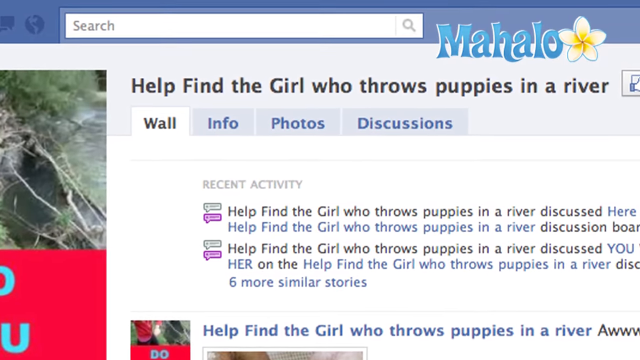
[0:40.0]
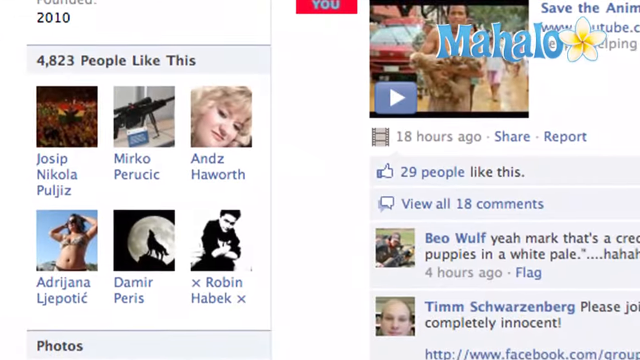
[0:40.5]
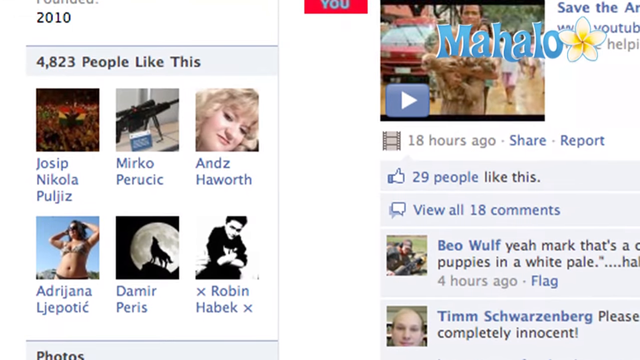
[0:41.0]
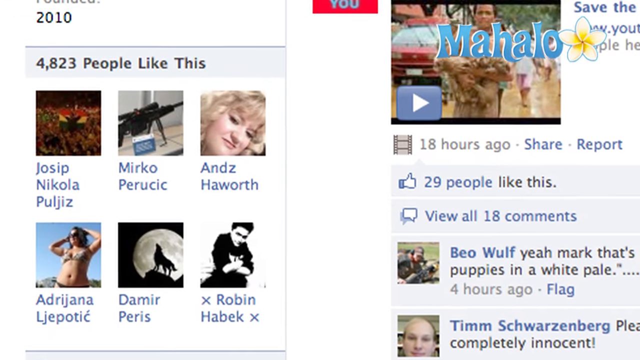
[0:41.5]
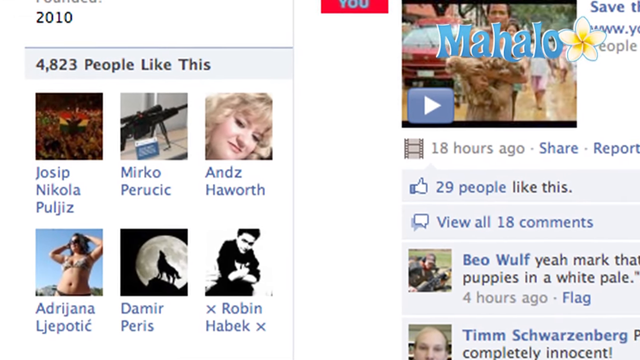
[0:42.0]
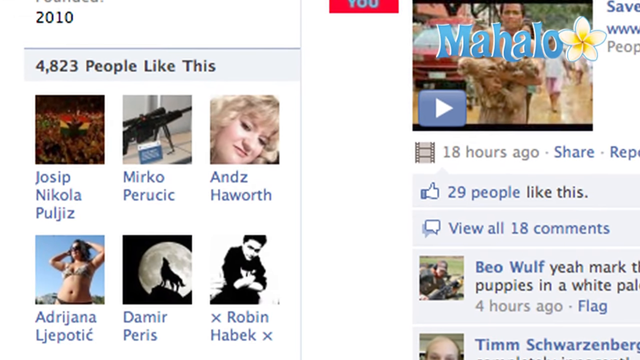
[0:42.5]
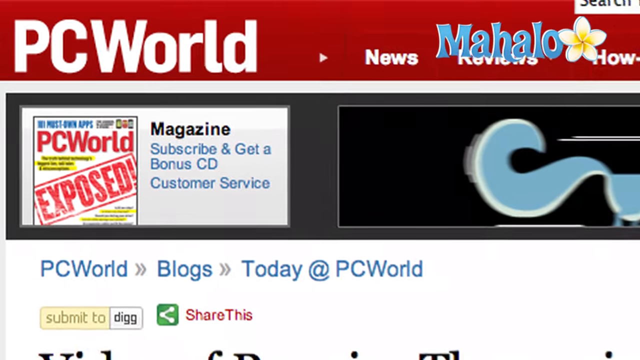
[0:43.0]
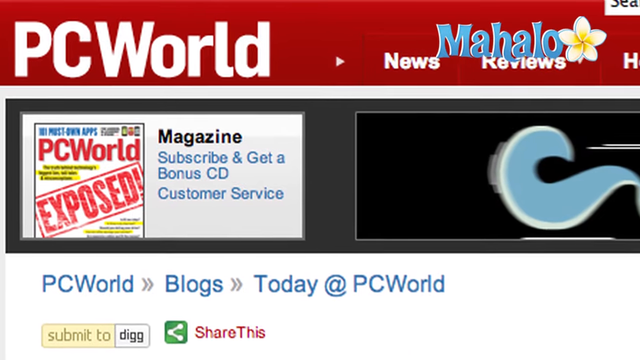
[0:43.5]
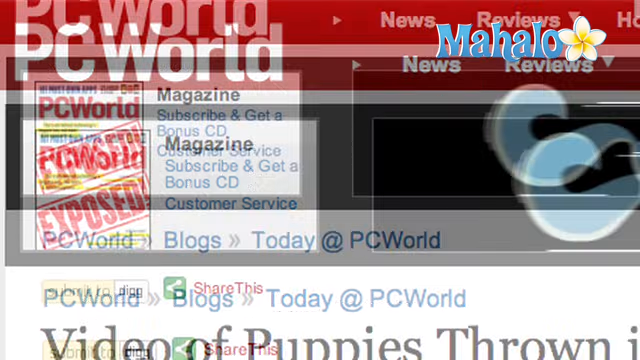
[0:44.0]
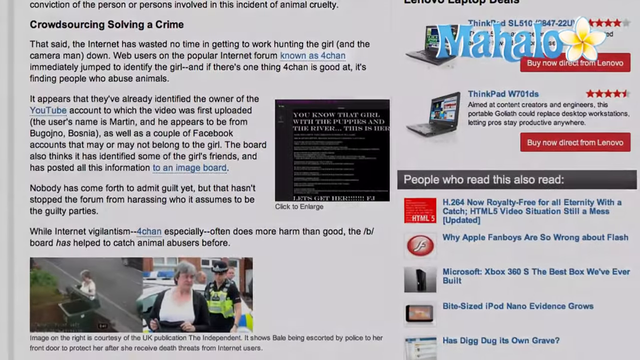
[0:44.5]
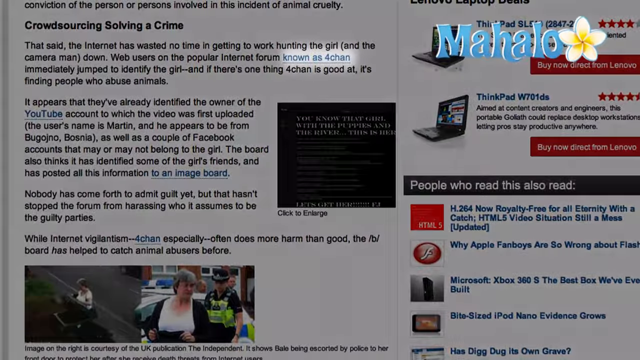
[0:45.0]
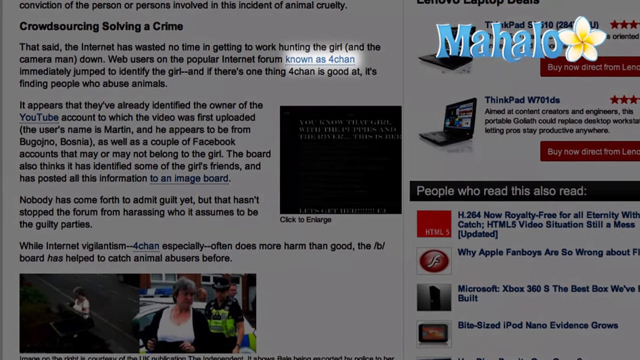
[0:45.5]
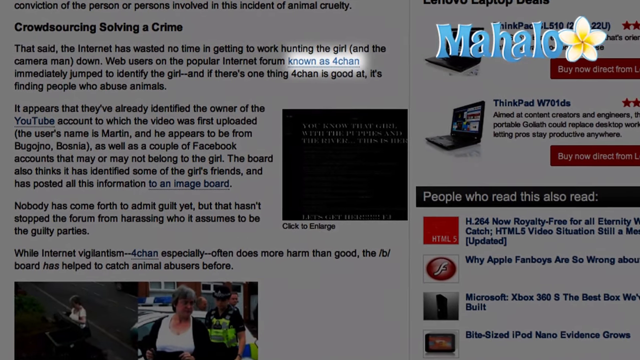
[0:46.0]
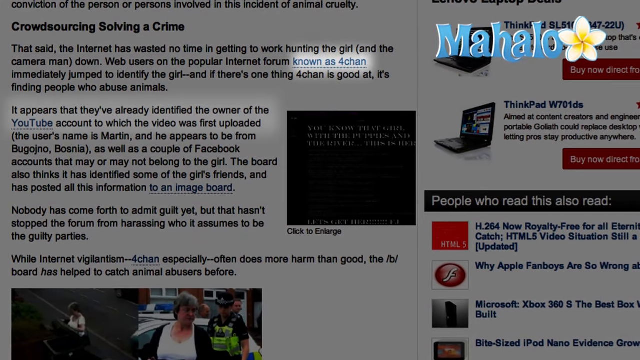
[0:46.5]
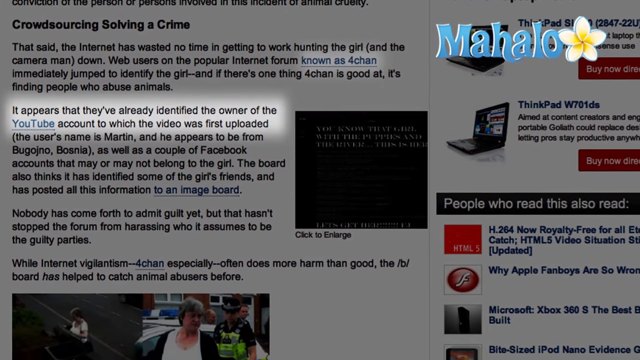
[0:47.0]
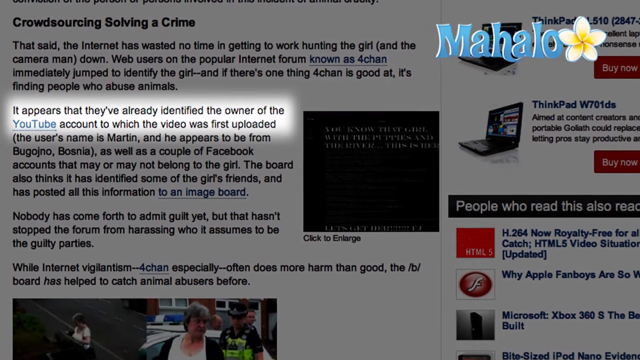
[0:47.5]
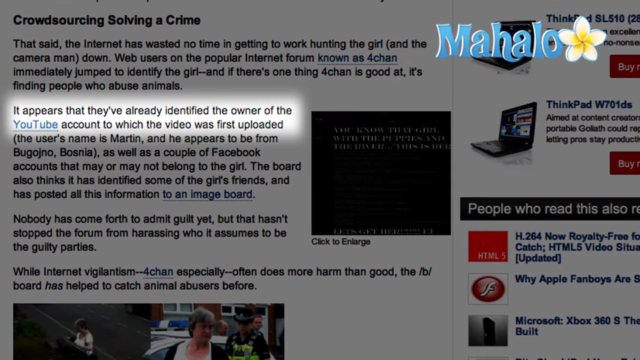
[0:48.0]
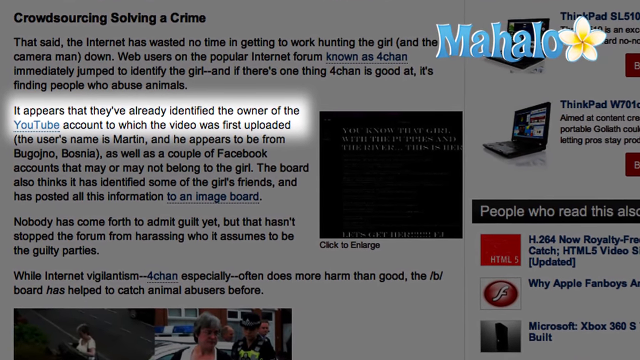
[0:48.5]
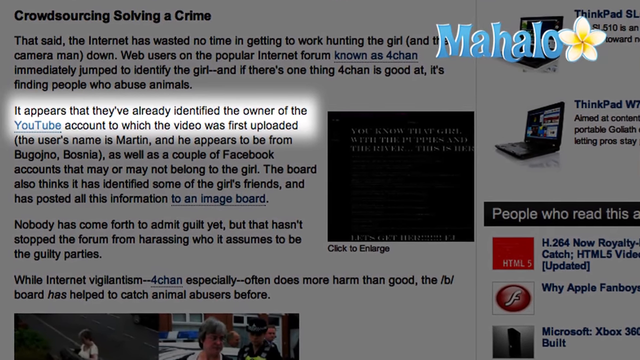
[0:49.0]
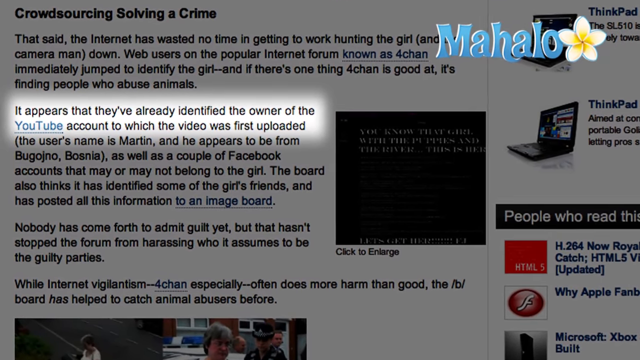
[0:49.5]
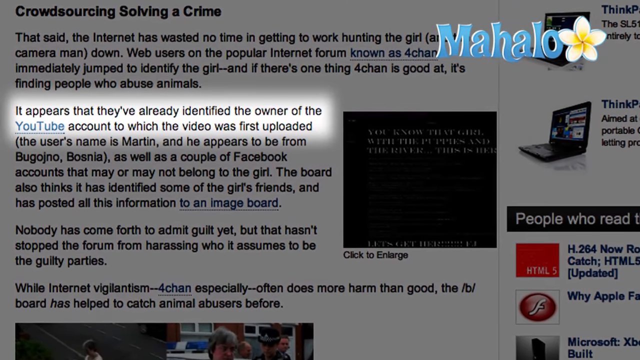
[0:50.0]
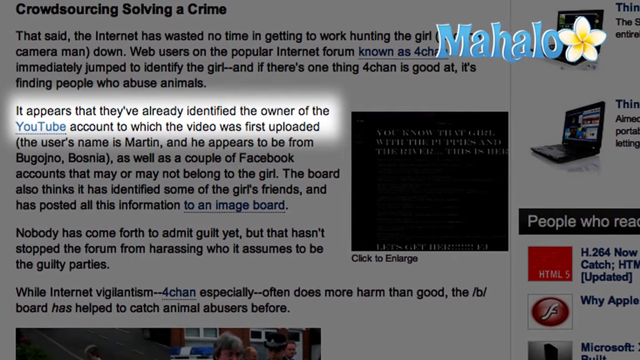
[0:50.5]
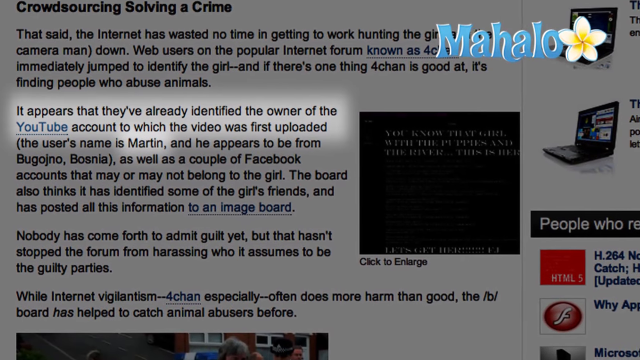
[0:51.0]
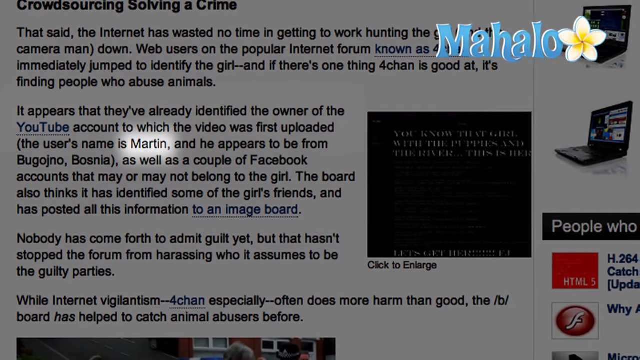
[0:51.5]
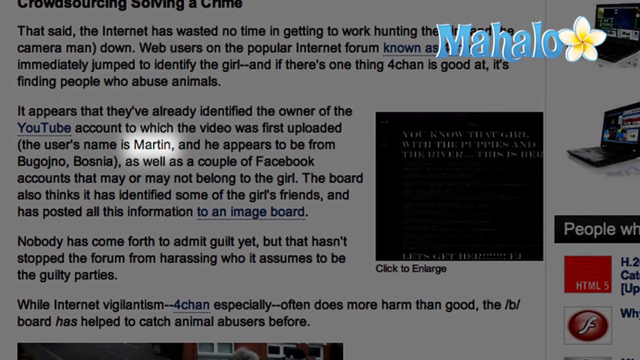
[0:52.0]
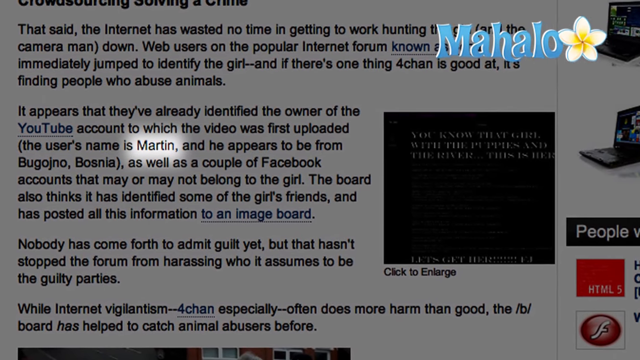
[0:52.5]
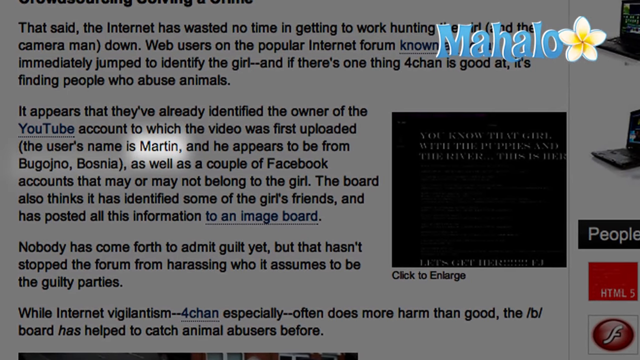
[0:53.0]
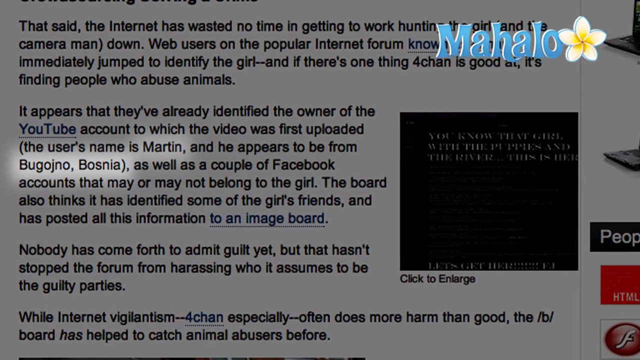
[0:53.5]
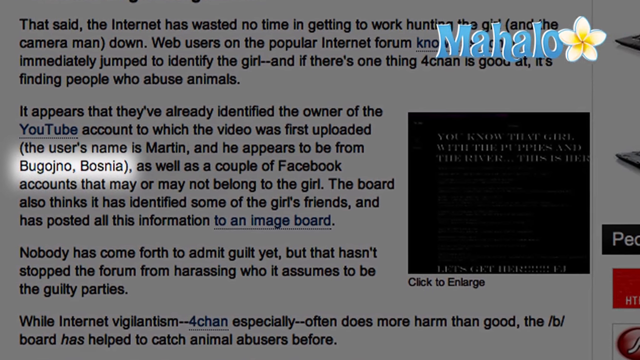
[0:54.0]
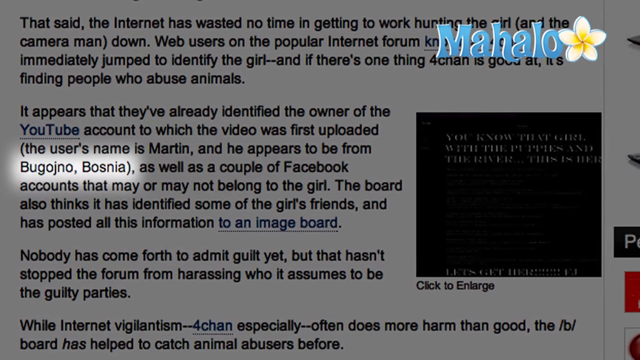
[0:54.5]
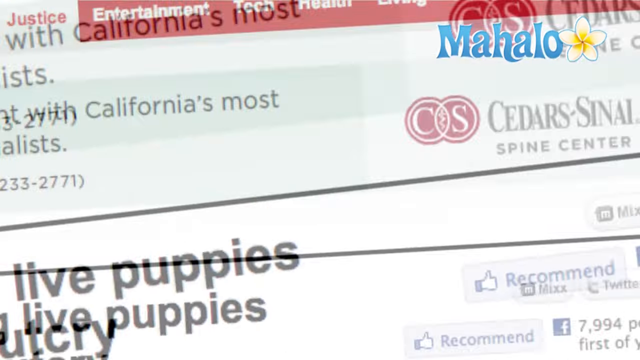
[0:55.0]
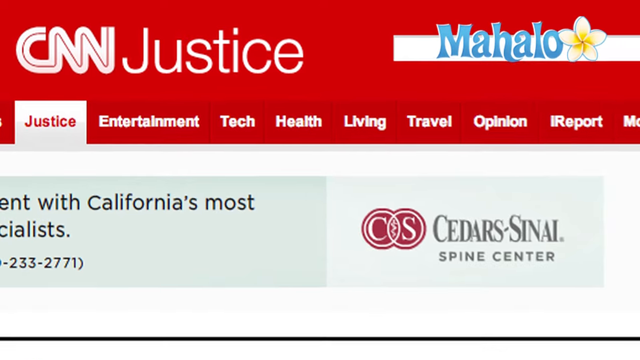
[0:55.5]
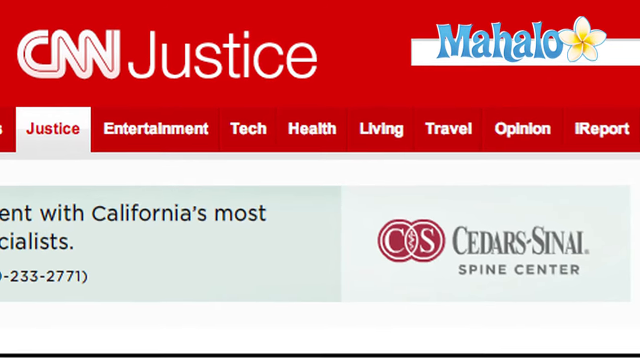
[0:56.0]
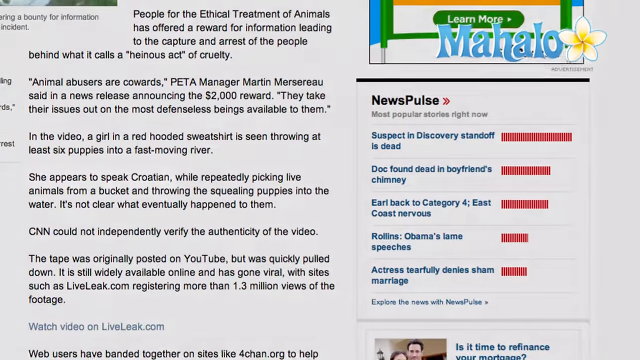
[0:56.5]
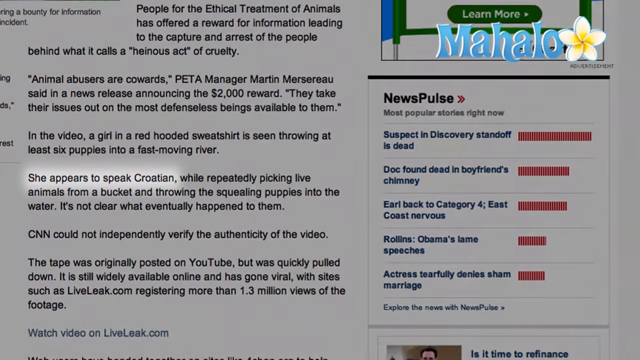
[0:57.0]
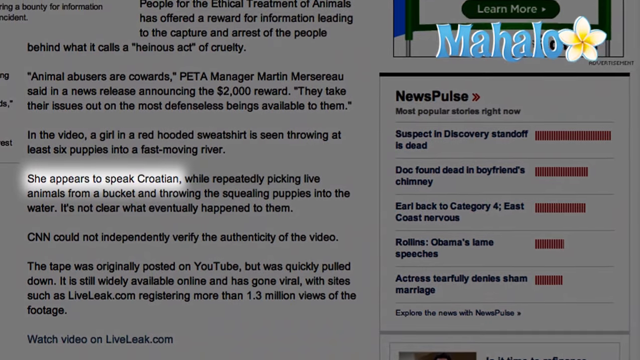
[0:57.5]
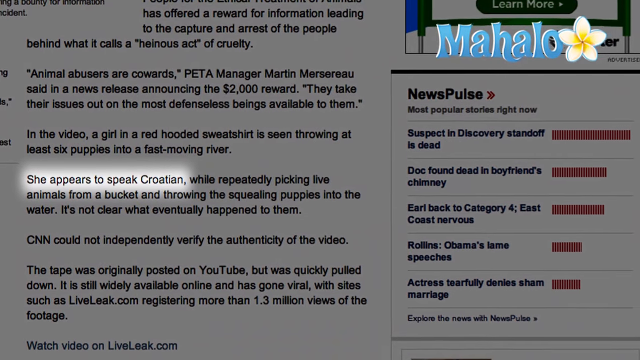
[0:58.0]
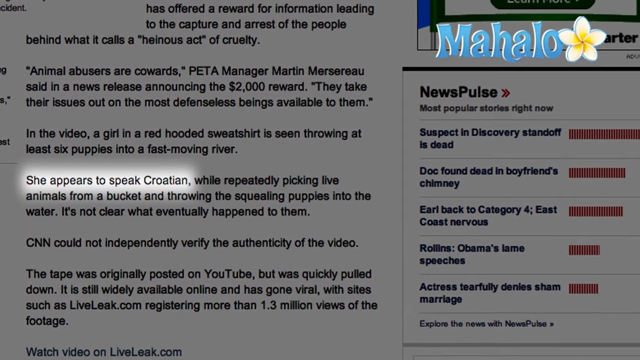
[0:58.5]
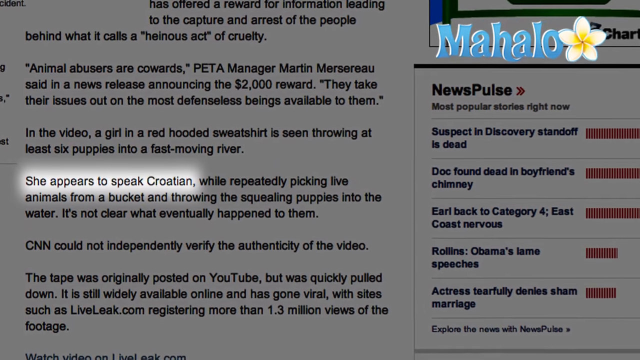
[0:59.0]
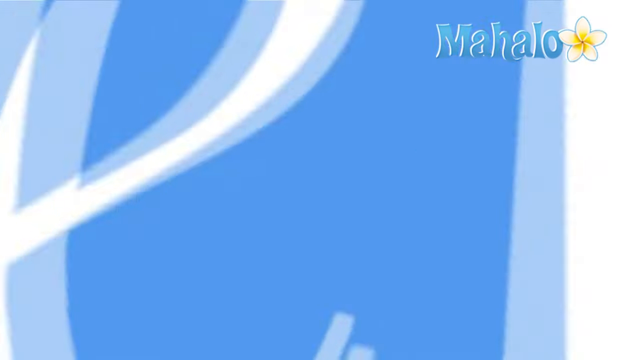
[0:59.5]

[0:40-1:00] A PC World page shows "Magazine", "subscribe and get bonus", "customer service" and "news and reviews". Article text reads "Appears they have already identified the owner of the YouTube account to which the video was first uploaded" and "Nobody has come forth to admit guilt yet. But that hasn't stopped the forum from harassing who it assumes to be the guilty parties." Pictures of people are shown: a lady, two guys, and two more young people. At the end, "PETA" is written on the screen.